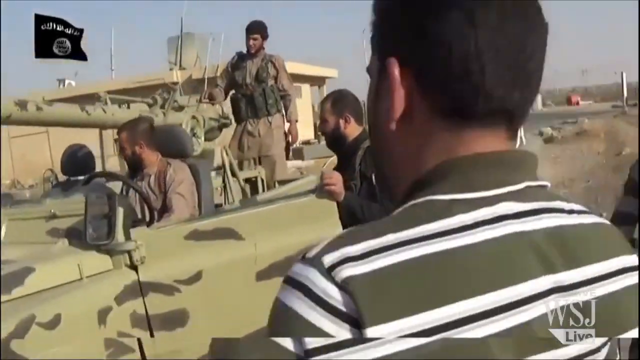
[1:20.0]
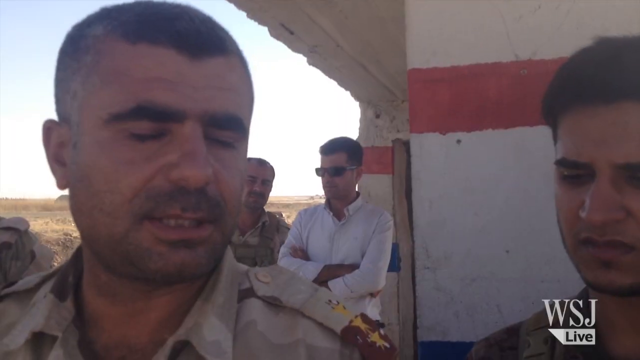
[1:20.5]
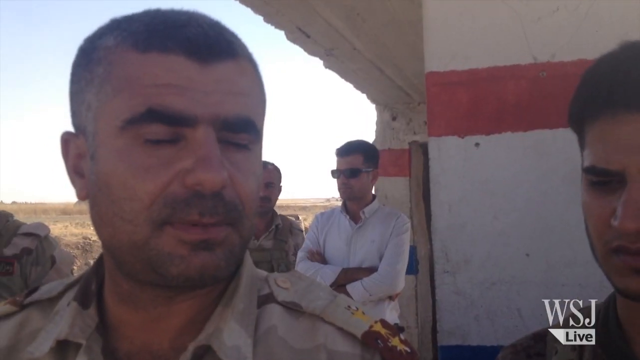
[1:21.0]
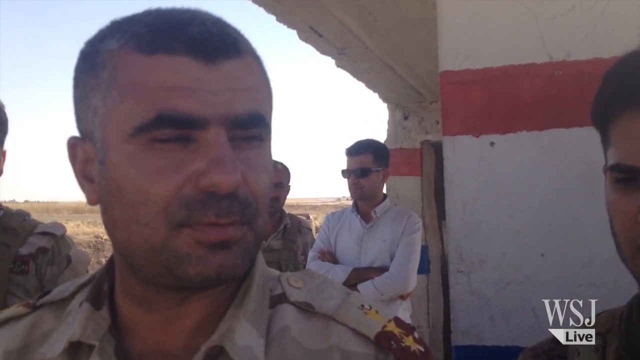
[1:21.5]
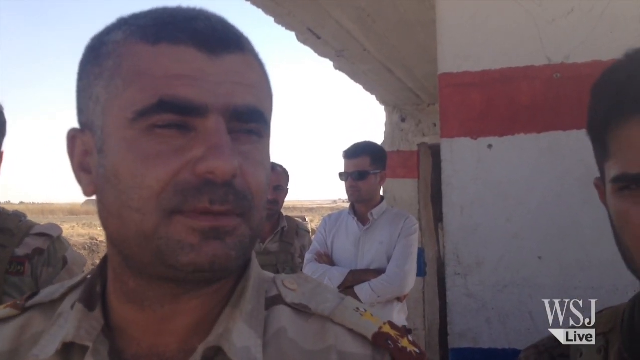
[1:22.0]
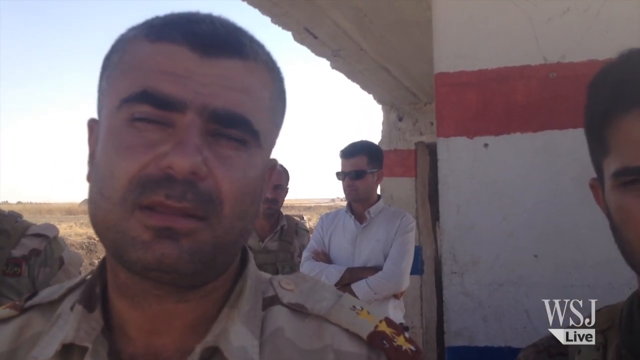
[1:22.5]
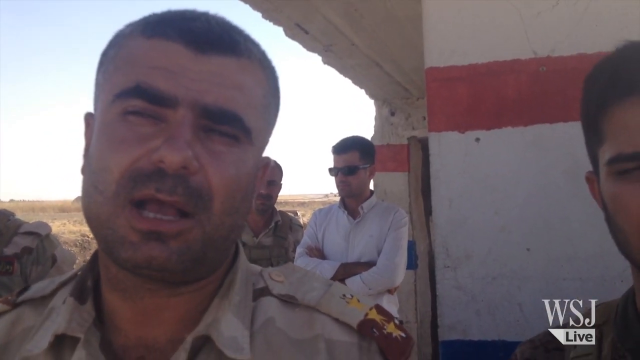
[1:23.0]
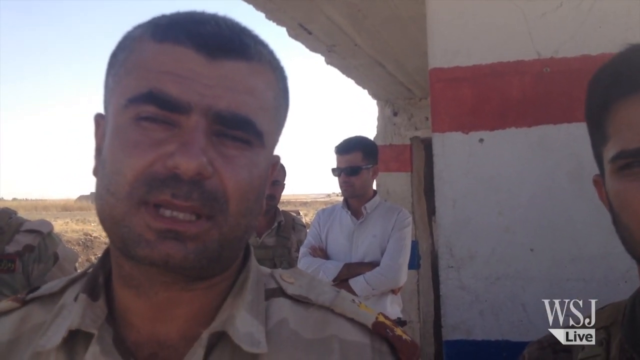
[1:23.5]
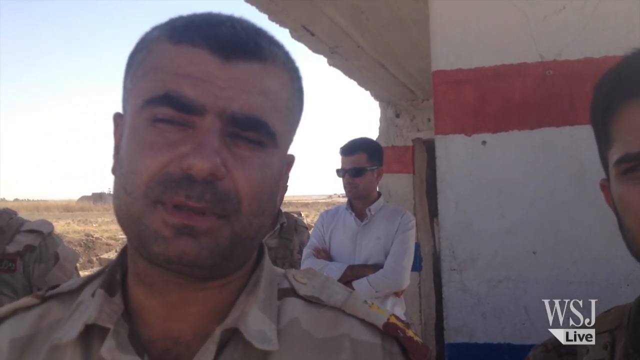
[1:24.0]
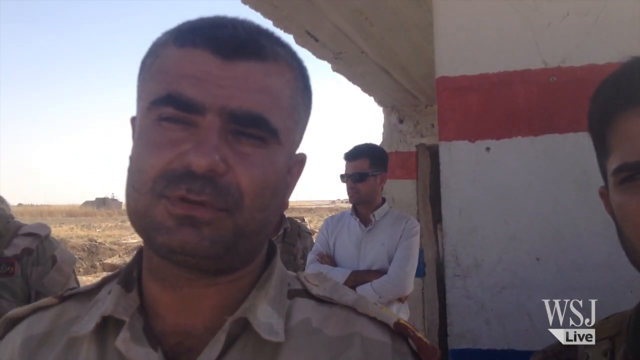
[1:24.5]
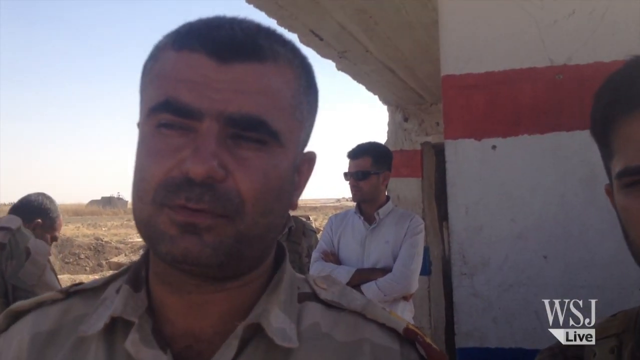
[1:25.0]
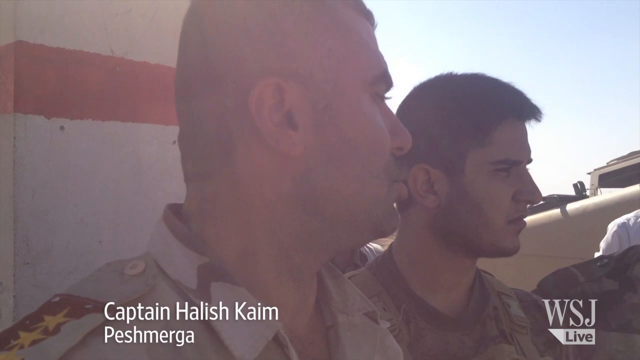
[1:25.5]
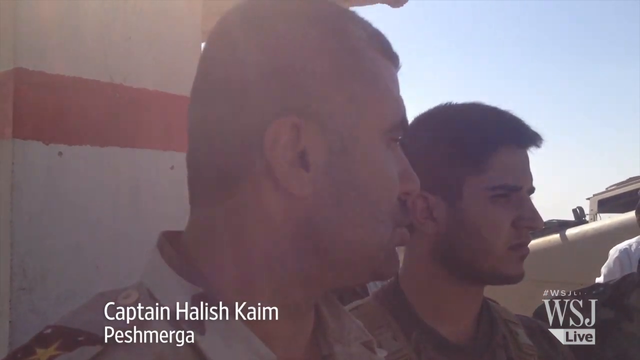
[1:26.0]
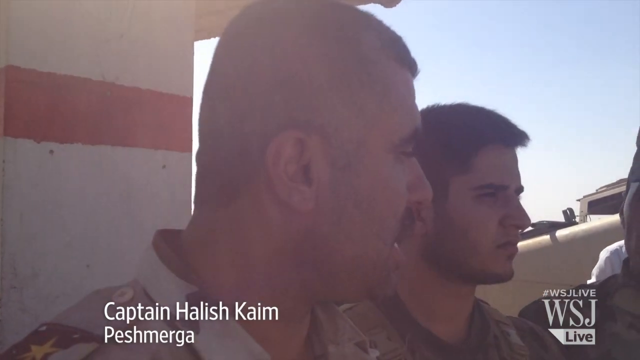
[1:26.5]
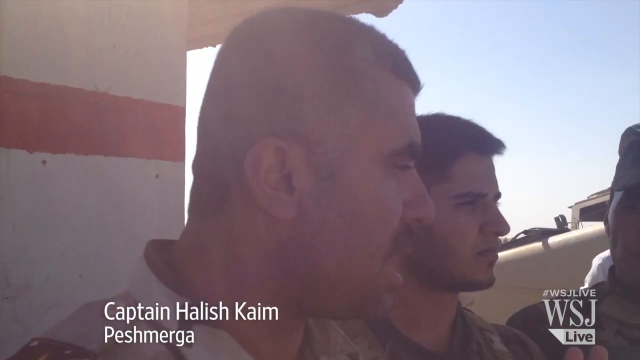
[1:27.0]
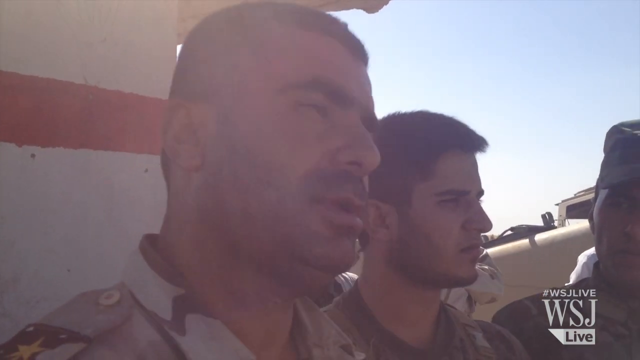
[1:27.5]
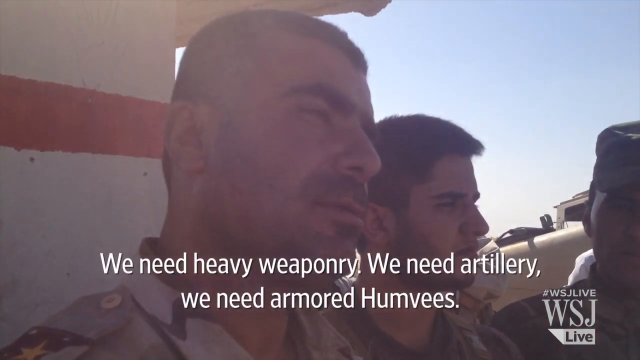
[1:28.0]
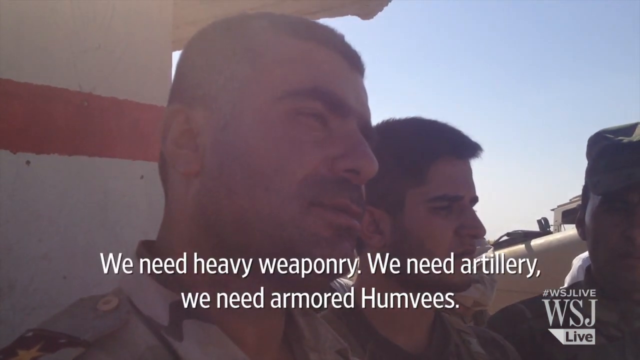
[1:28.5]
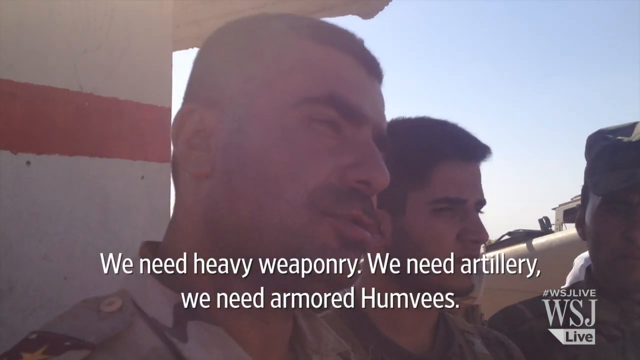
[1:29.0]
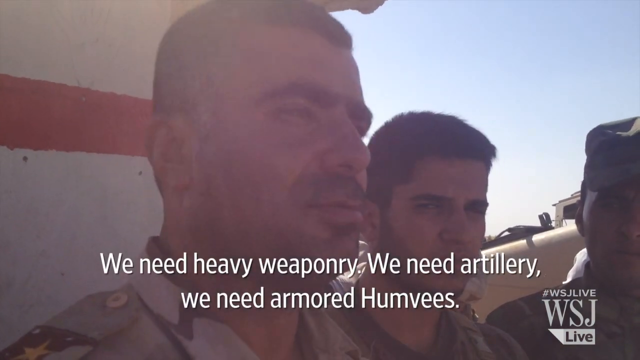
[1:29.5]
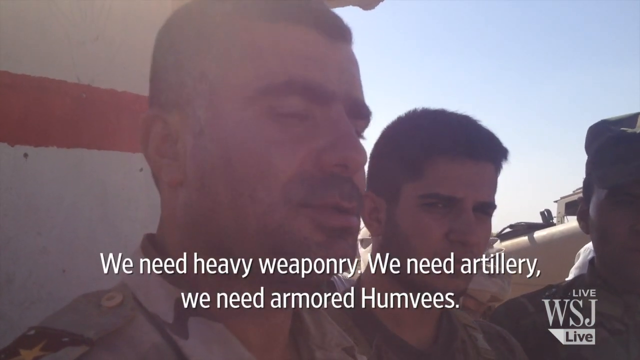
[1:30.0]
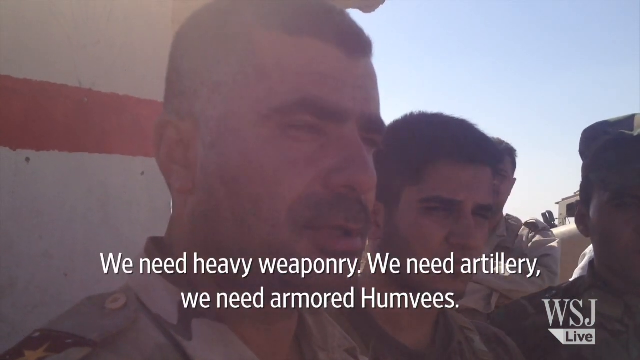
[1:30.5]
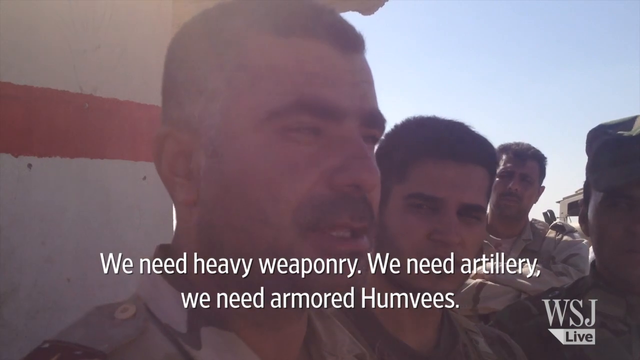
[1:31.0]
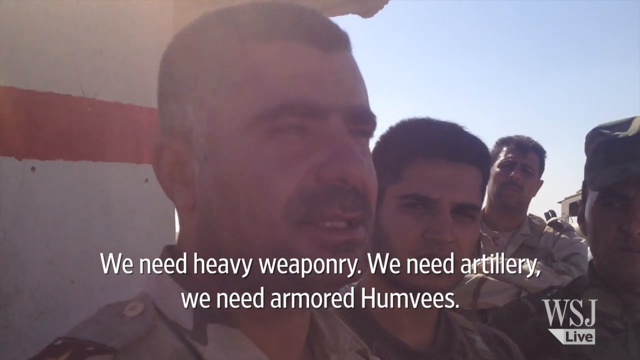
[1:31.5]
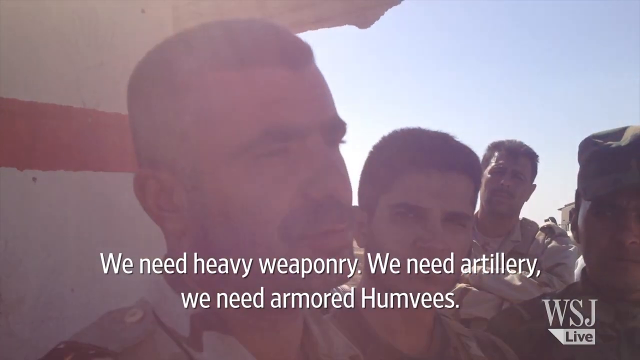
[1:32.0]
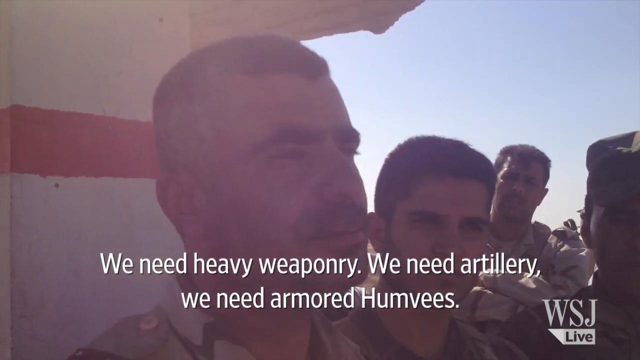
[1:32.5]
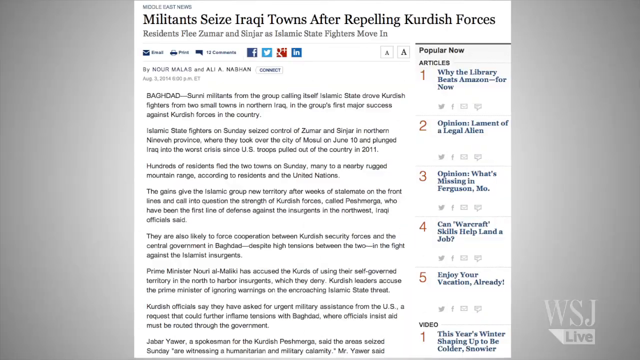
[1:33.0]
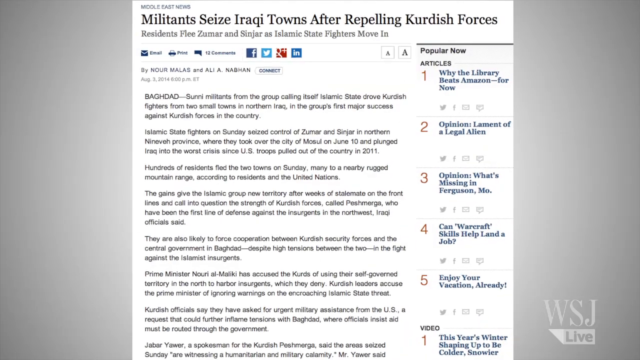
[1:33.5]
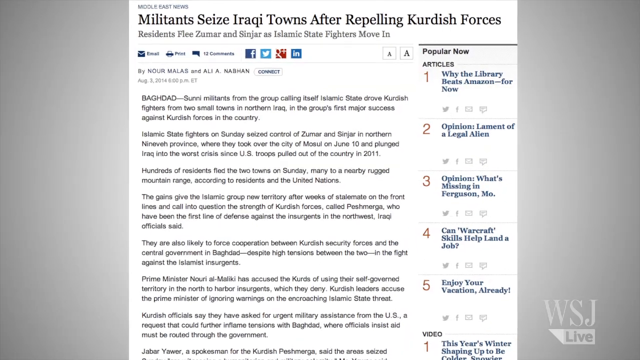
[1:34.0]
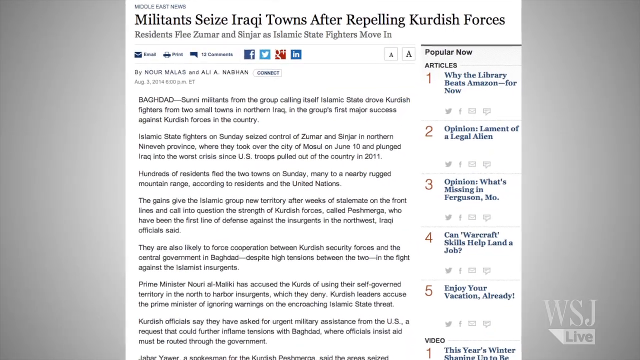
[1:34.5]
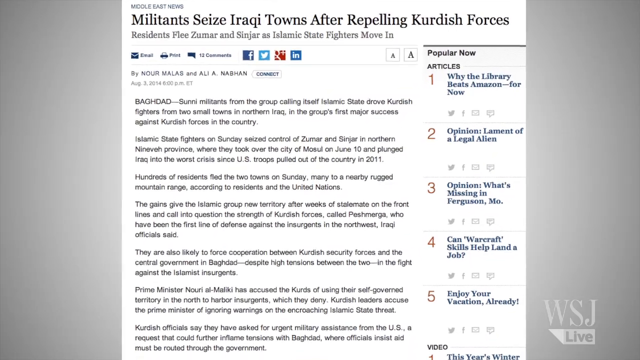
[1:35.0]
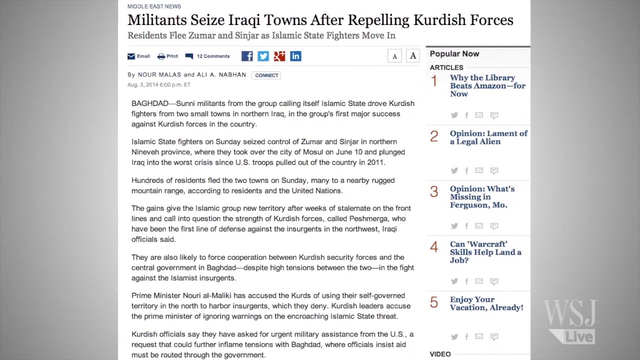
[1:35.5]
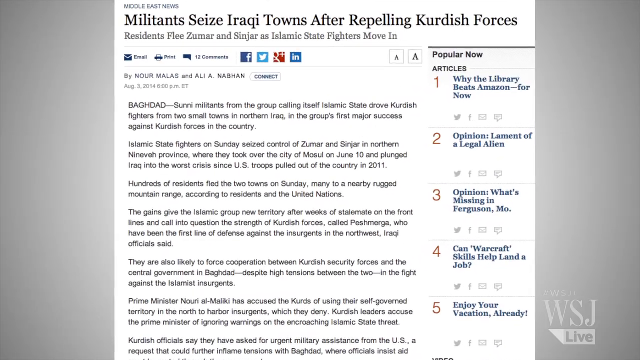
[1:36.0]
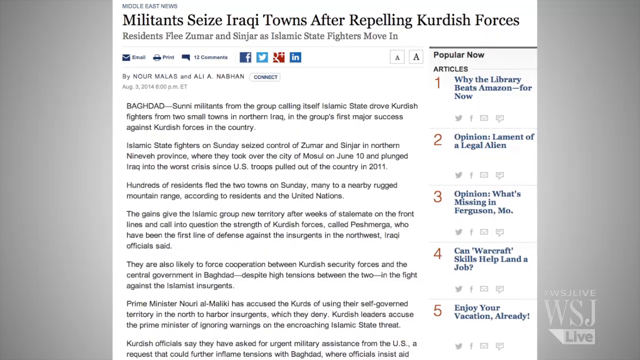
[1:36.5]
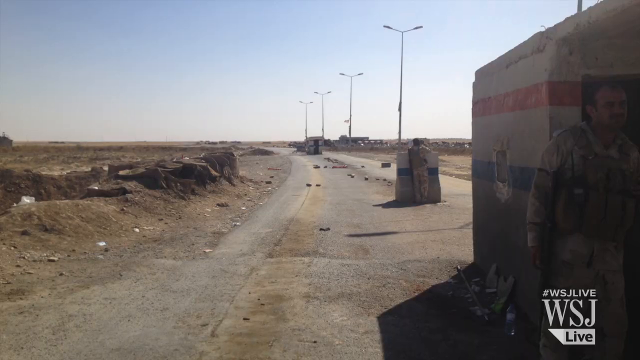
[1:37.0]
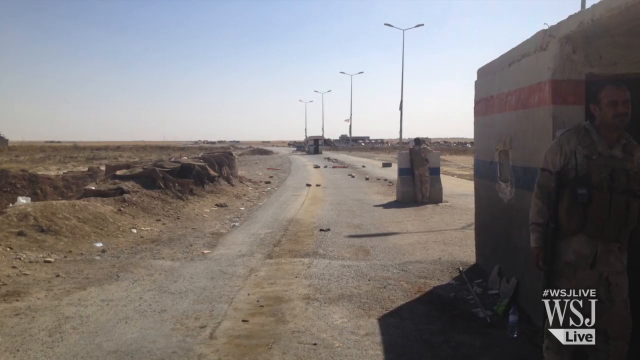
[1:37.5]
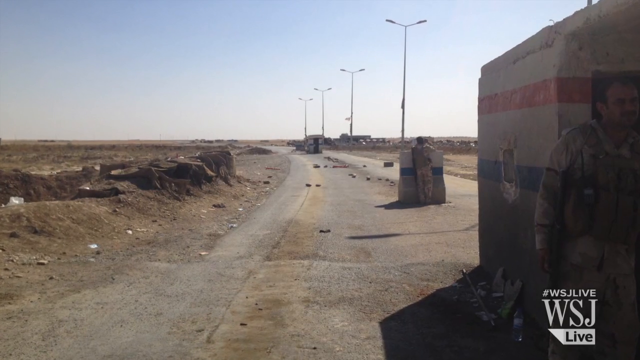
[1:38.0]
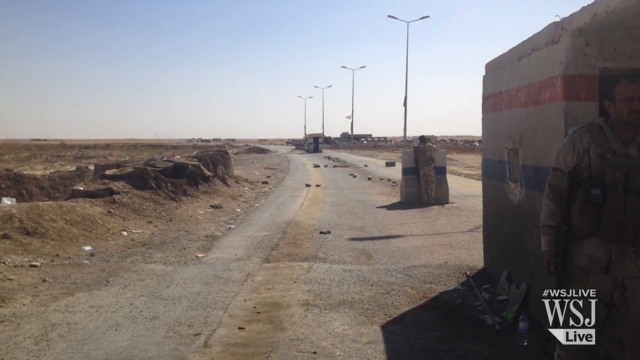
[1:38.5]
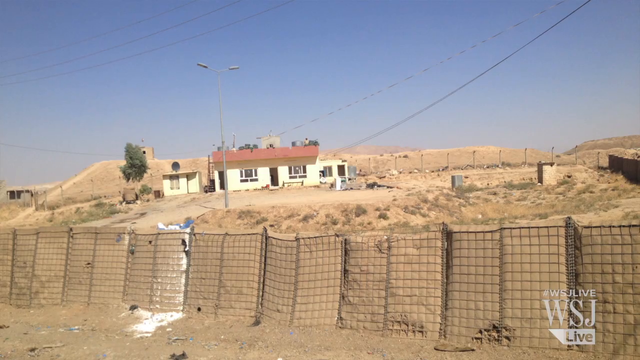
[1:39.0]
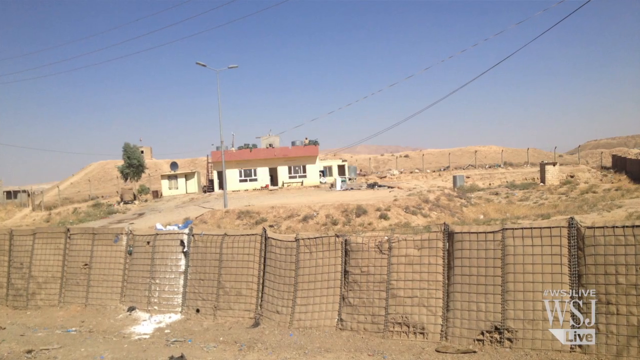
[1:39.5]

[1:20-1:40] In the lower right foreground is a man seen from the shoulders up, from behind and zoomed in closely, facing toward the upper left. In front of him is a green camouflage military vehicle facing maybe around eight o'clock. The vehicle has a few people in it, including a driver in the driver's seat and a man standing in the back, both in tan uniforms. On the left in the background, a black flag above a tan building flies toward the right. The video then cuts to a man on the left, seen from the shoulders up, who seems to be in a tan military uniform, talking to the camera with a few people in the background behind him. It is daytime and the sky is bright blue.